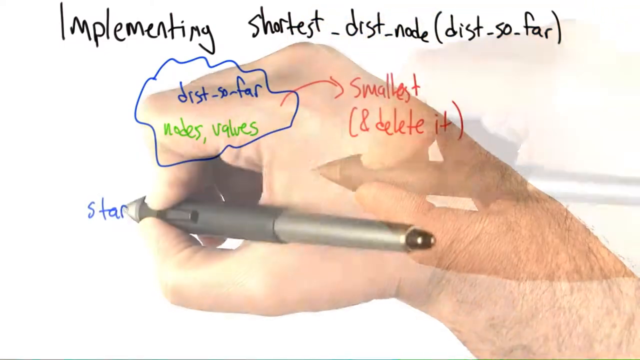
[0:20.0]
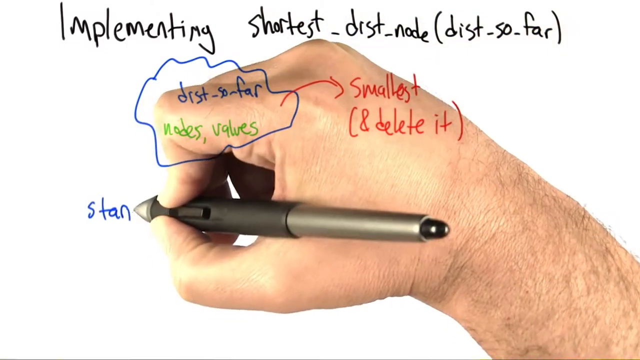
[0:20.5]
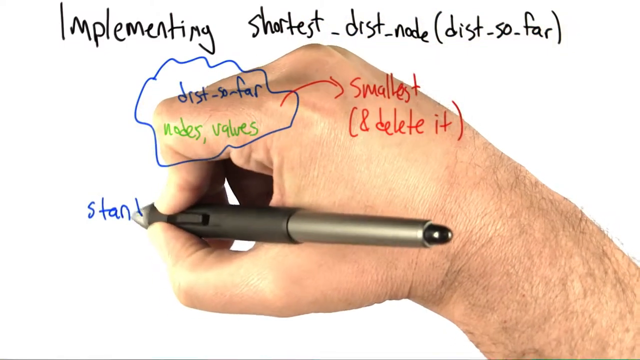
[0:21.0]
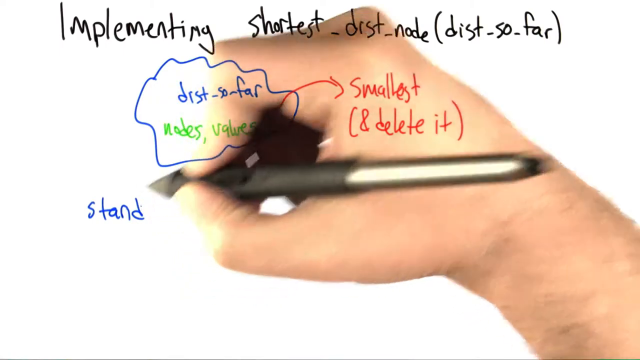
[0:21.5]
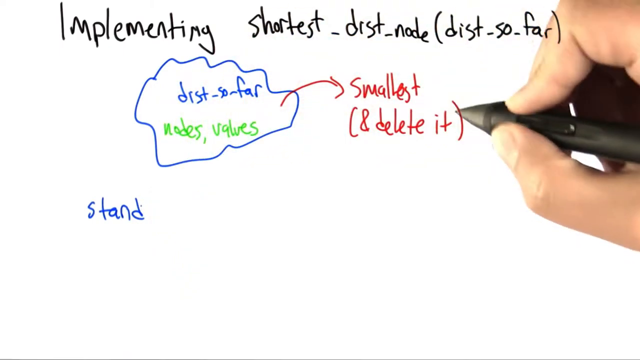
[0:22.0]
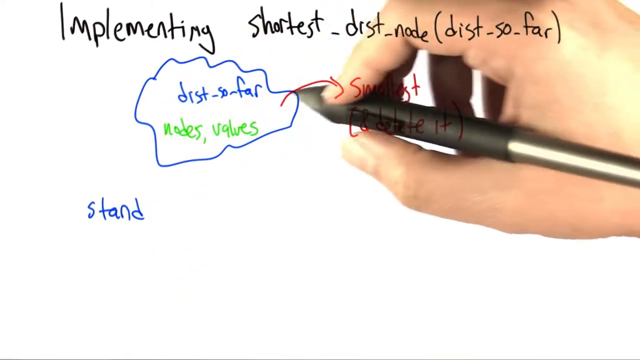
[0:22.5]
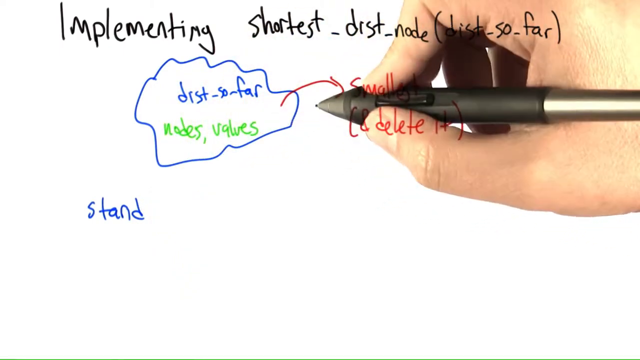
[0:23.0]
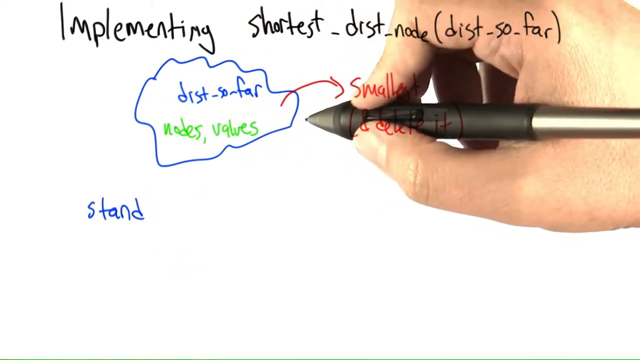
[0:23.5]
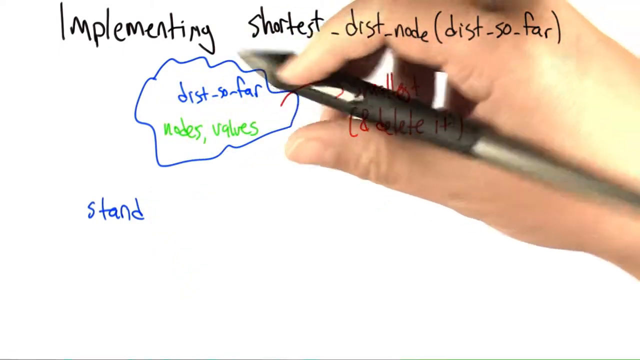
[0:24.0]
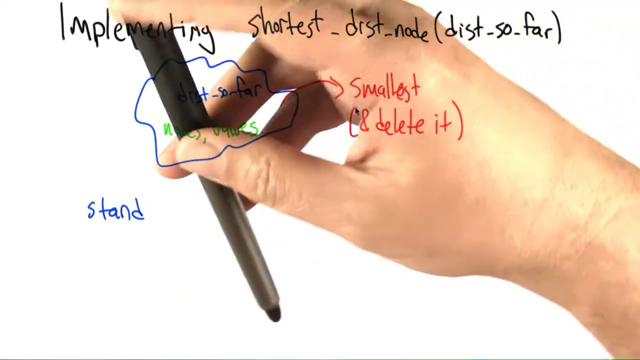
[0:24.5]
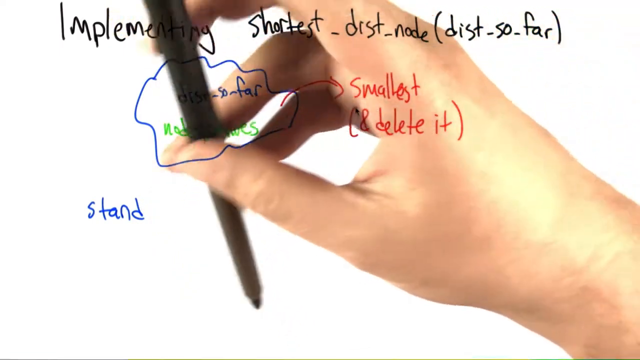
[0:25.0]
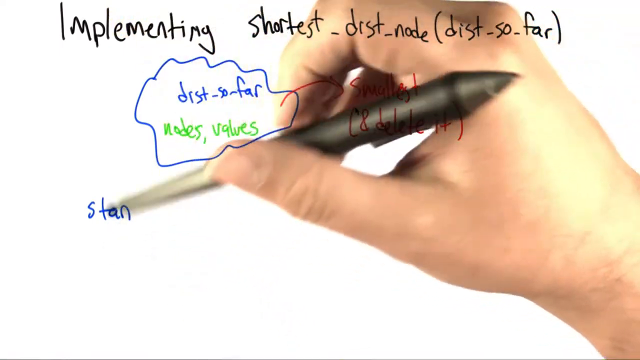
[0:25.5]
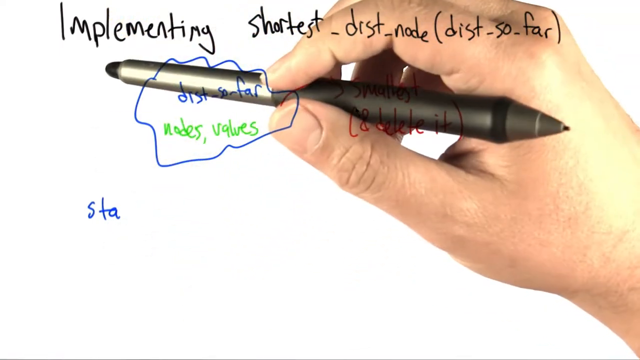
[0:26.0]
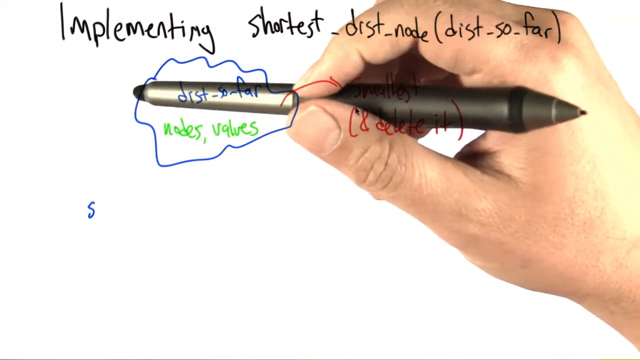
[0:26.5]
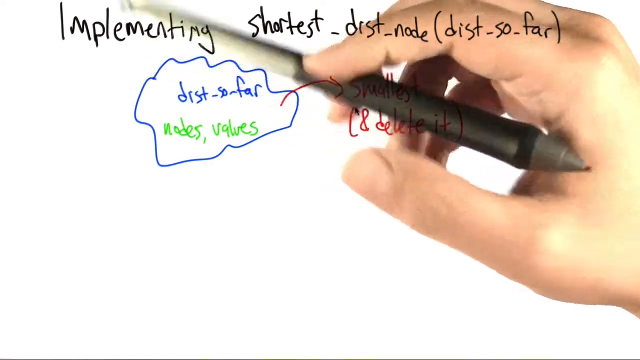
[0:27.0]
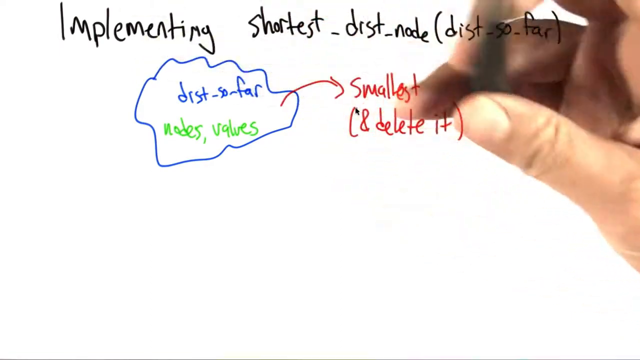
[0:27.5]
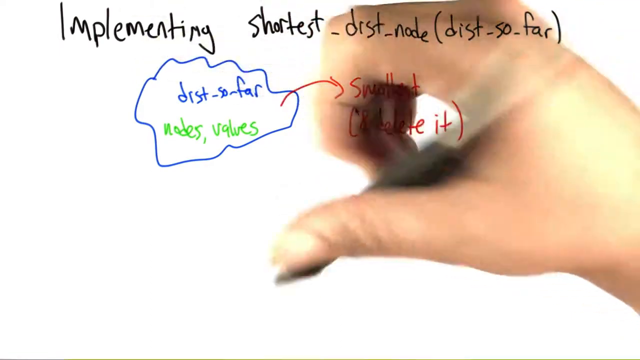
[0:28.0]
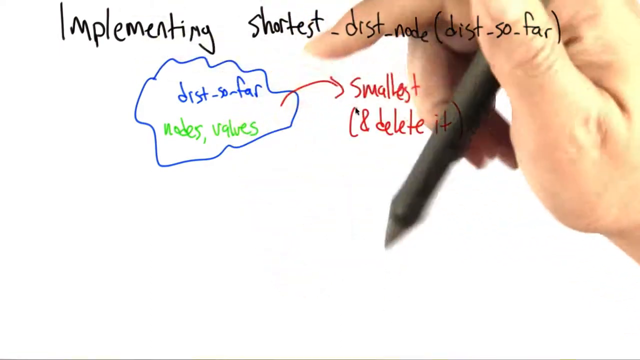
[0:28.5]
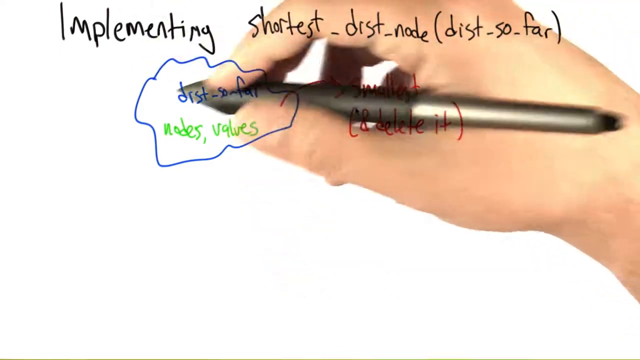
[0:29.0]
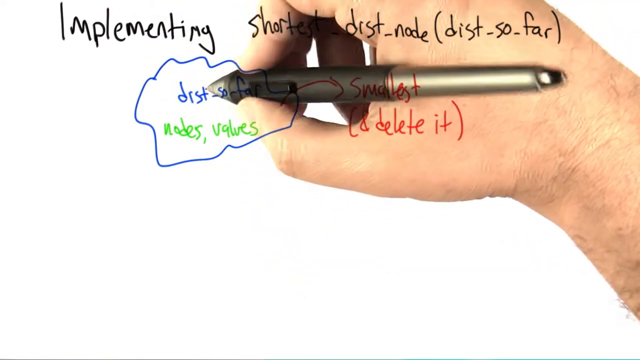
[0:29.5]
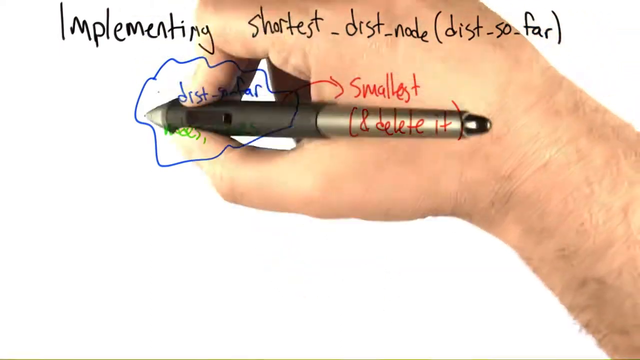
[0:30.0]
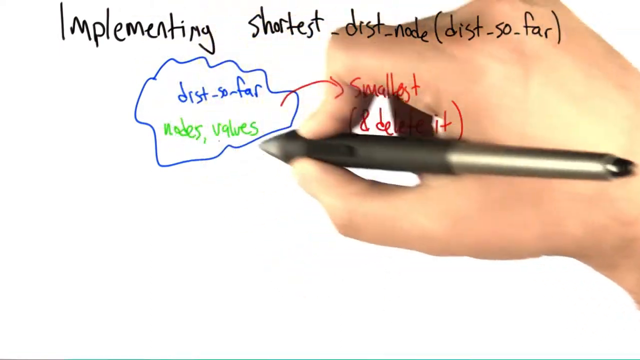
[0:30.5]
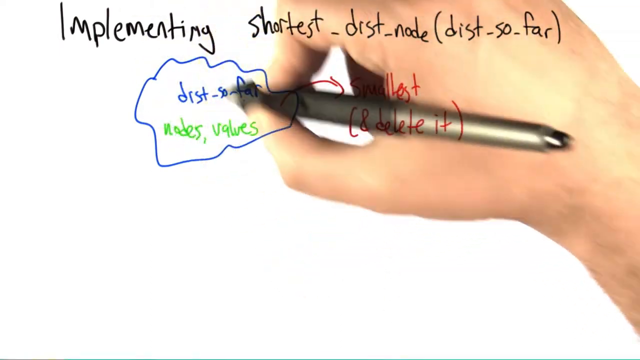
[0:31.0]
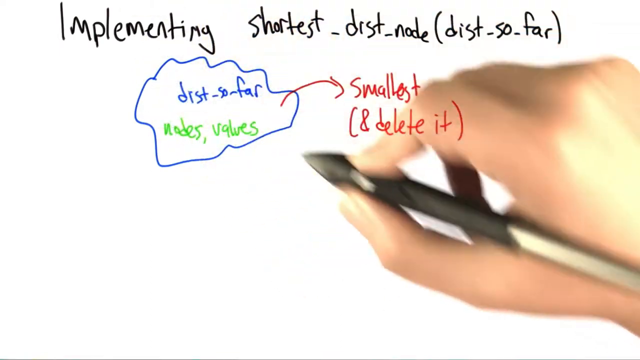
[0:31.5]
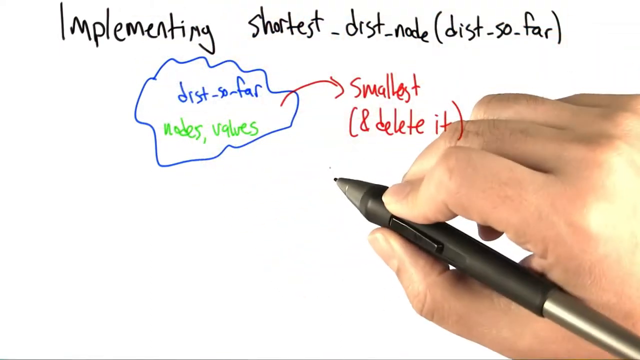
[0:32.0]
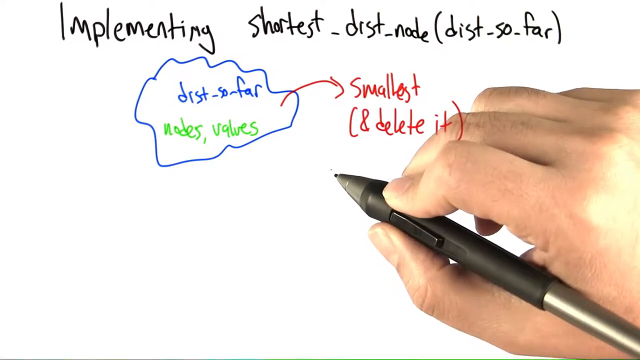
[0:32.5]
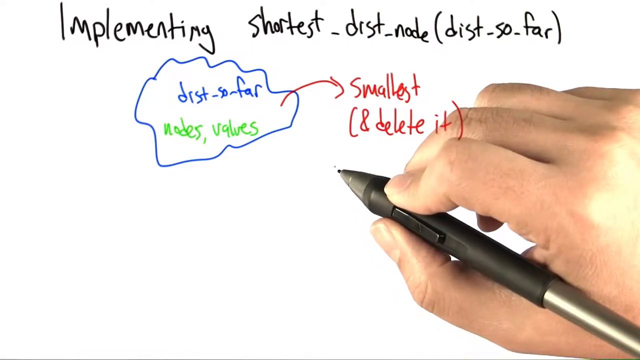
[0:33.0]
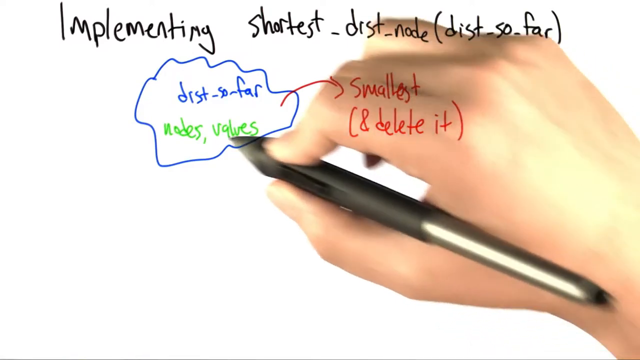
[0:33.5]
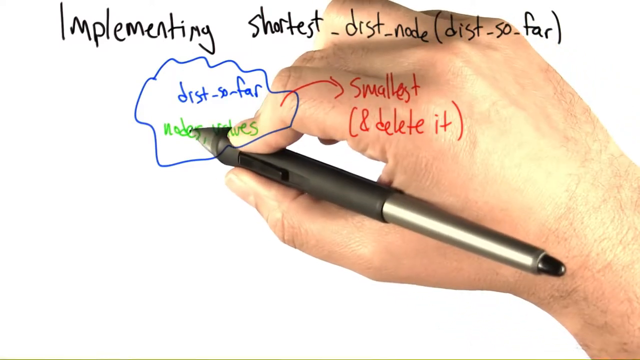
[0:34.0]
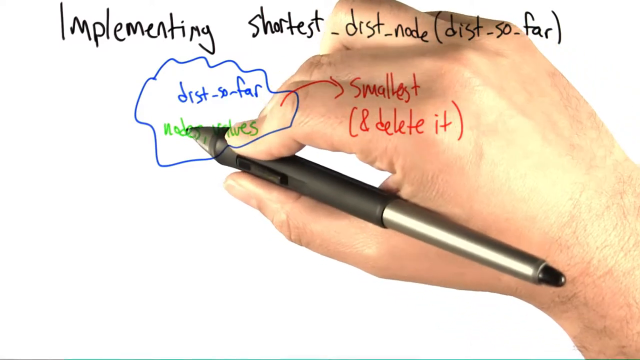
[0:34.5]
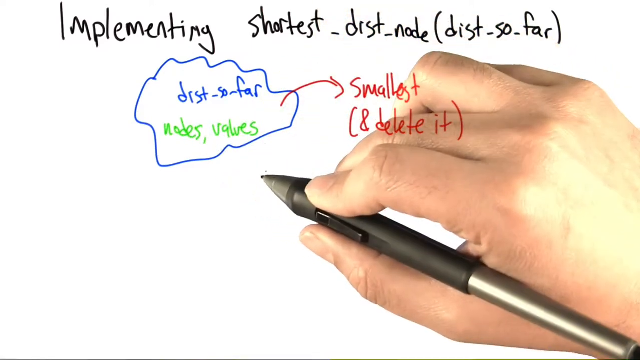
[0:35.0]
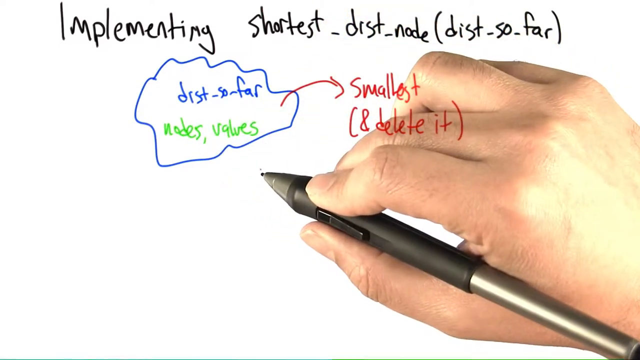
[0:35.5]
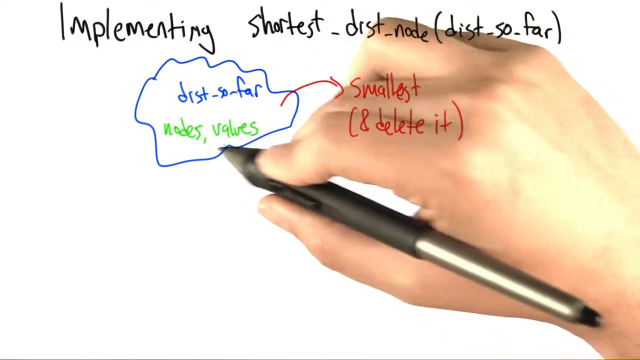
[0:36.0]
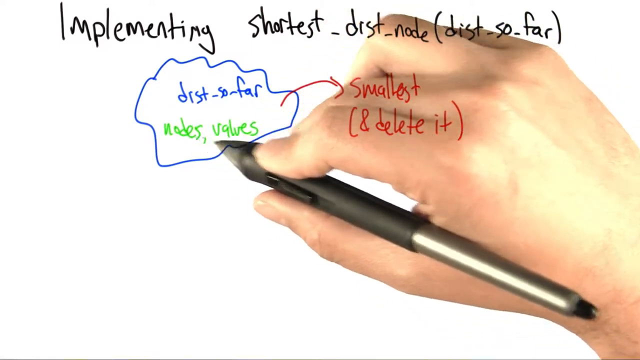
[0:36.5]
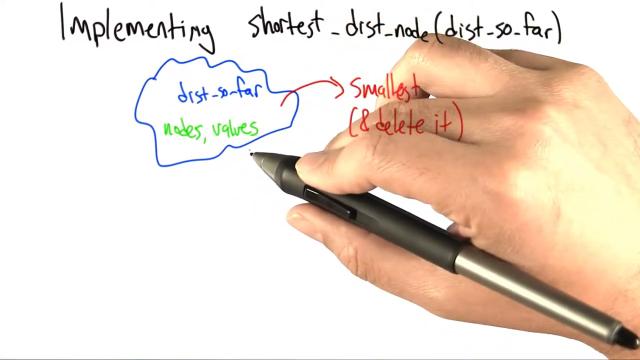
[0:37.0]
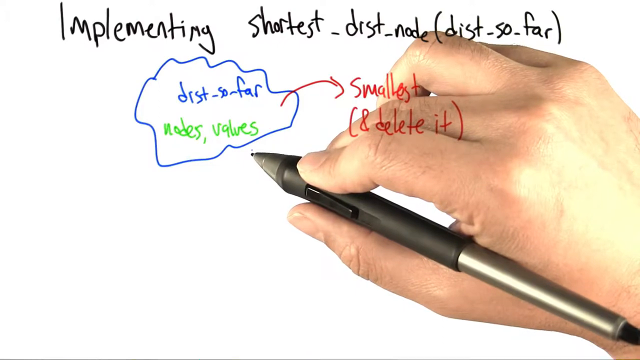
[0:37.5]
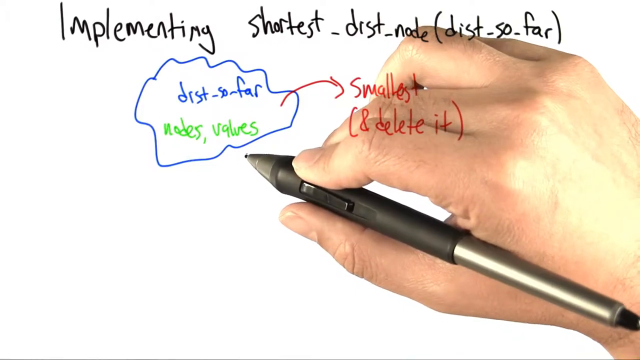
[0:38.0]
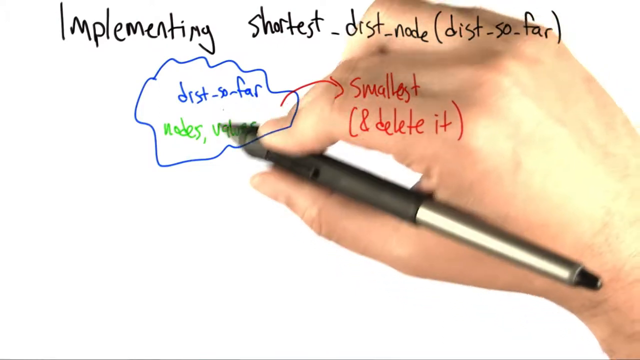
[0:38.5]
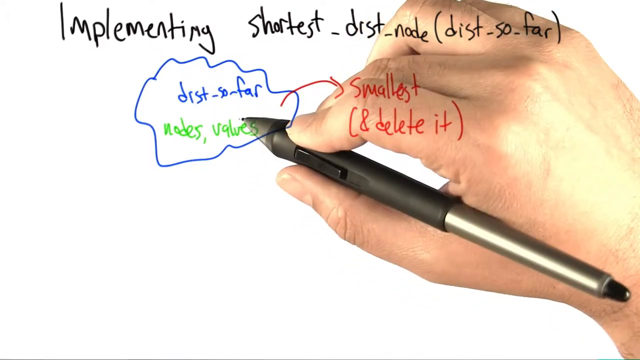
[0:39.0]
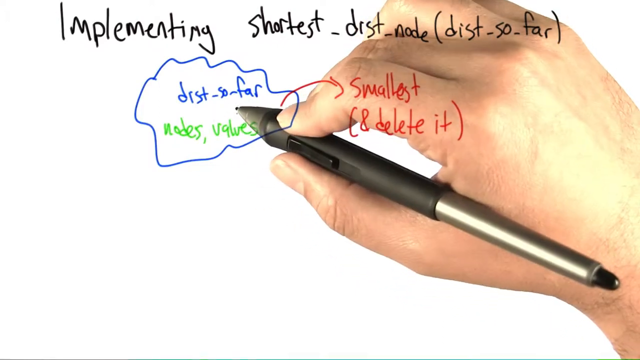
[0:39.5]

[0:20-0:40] The person's hand holds the pen while writing on the whiteboard, which has black, blue, green and red text on it. They write the word "stand", then go up to the center area, turn the pen around and click a button, and the last text disappears; the pen is a stylus and digital pen that writes on the whiteboard. At one point they twirl the pen in their fingers and point the other end toward the screen, erasing text on what apparently is a digital whiteboard. They turn the pen back around and point to the squiggly circle, which has text inside written in blue and green. A red arrow points outside the circle to more text, and red text to the right of the squiggly blue circle reads "smallest and delete it".